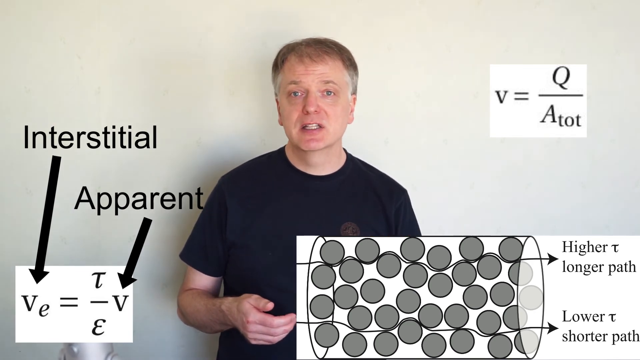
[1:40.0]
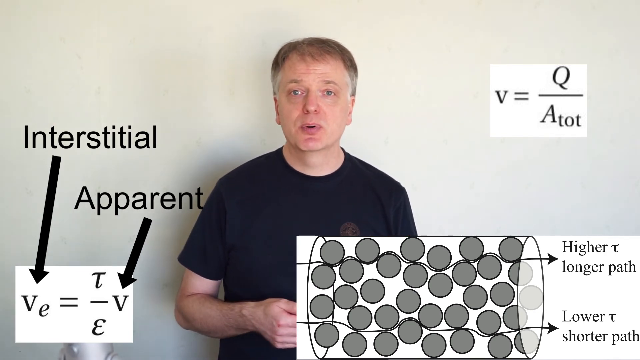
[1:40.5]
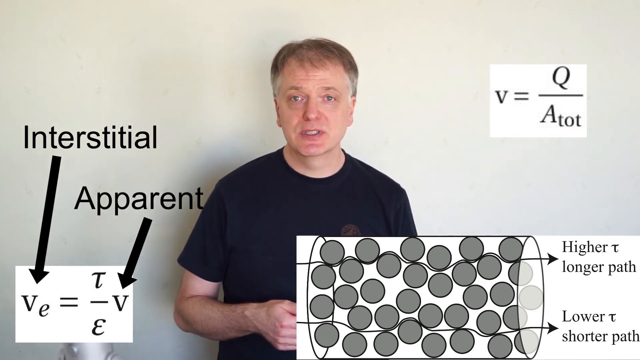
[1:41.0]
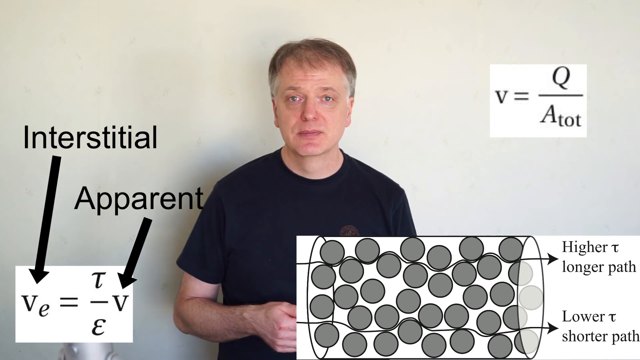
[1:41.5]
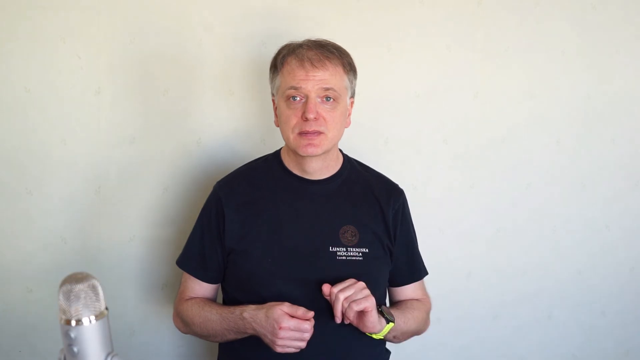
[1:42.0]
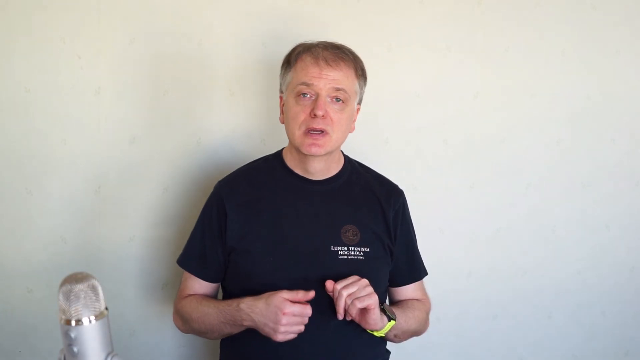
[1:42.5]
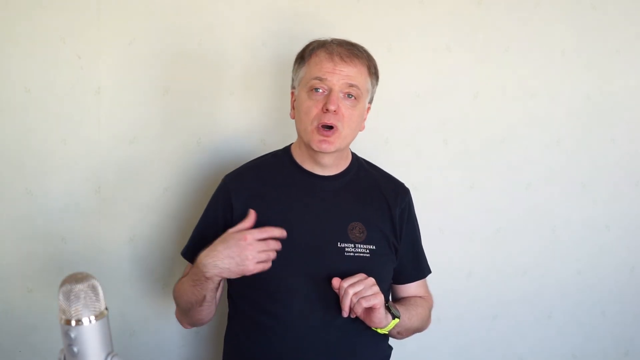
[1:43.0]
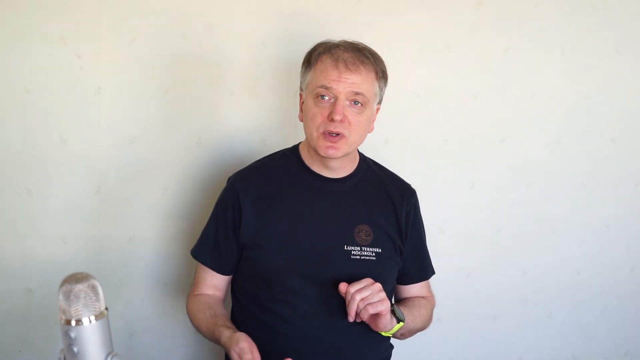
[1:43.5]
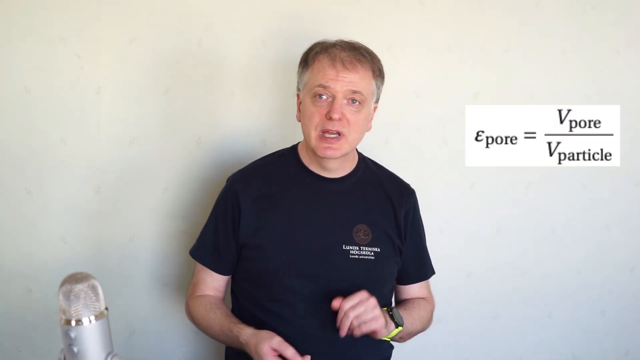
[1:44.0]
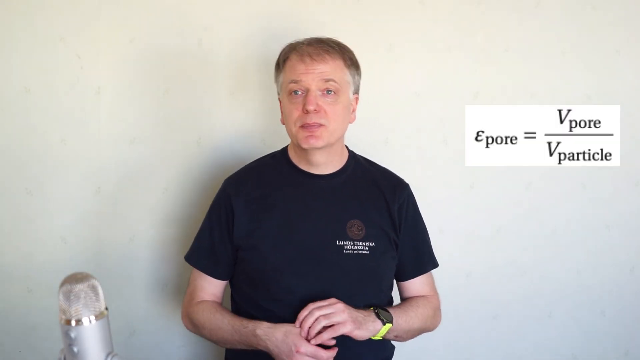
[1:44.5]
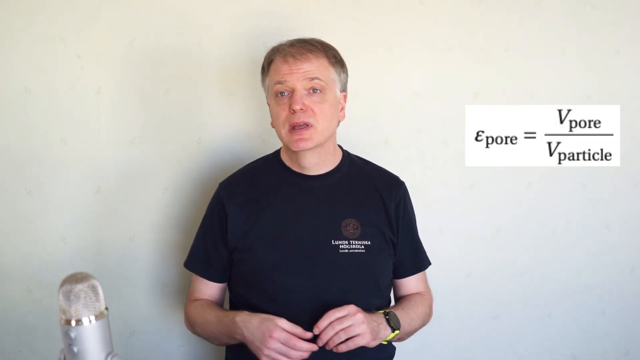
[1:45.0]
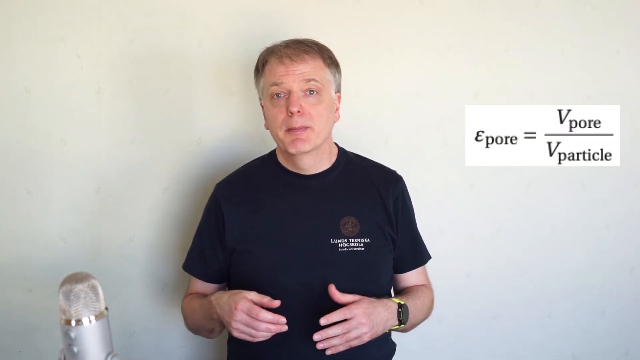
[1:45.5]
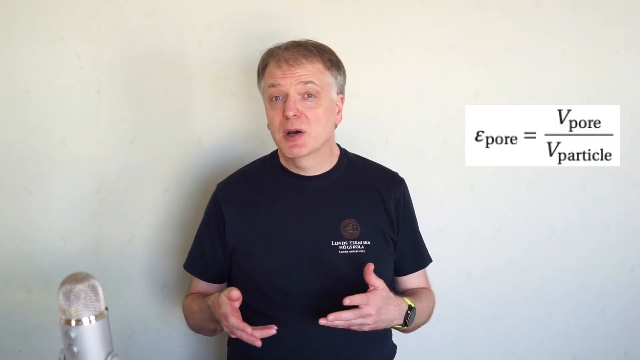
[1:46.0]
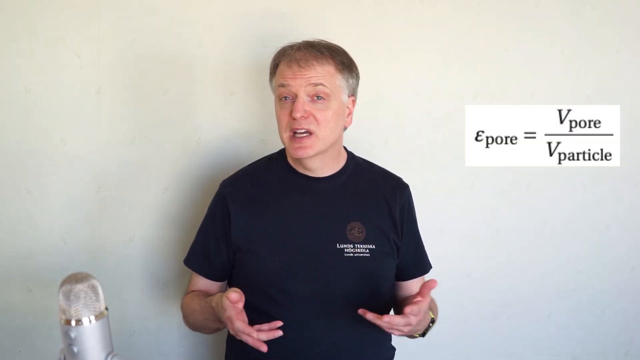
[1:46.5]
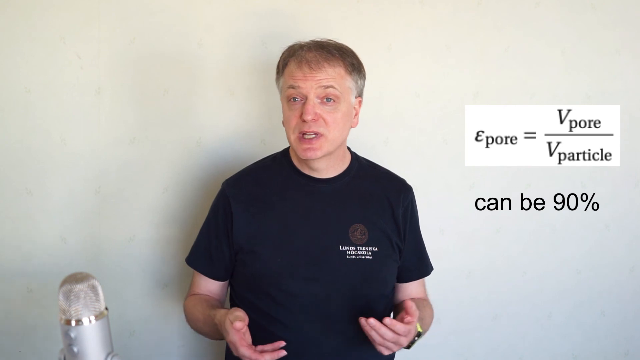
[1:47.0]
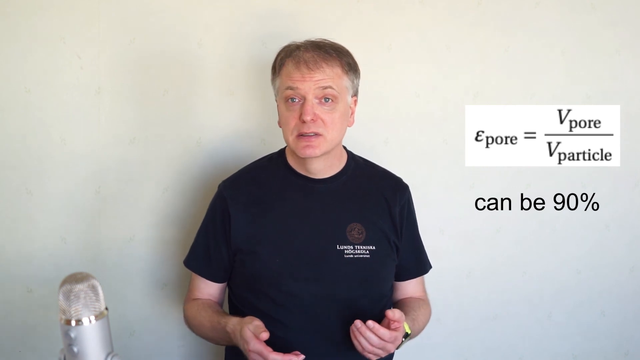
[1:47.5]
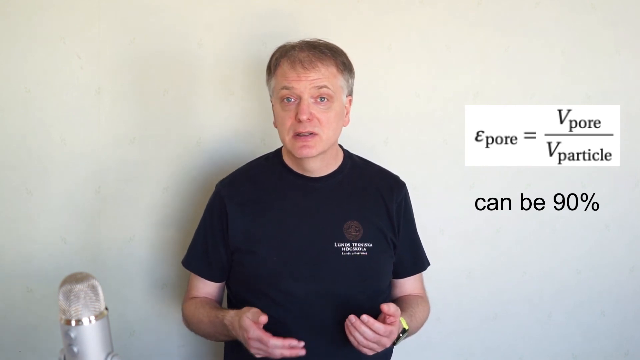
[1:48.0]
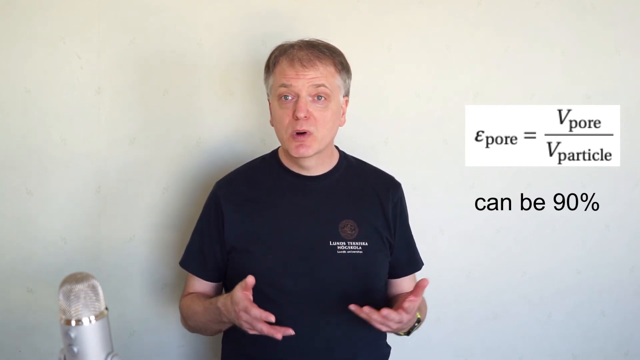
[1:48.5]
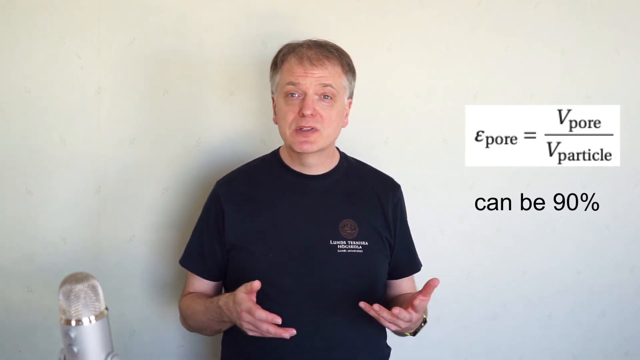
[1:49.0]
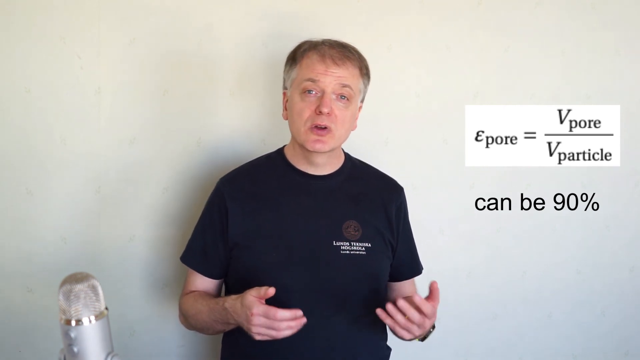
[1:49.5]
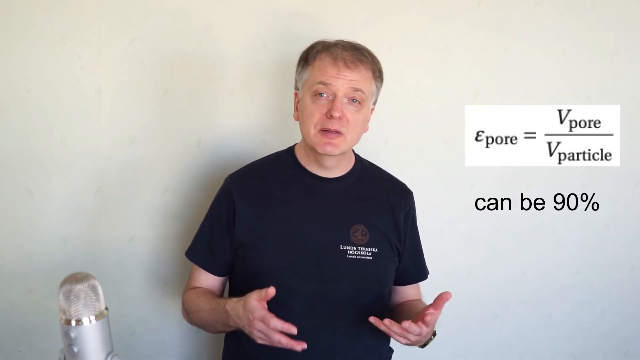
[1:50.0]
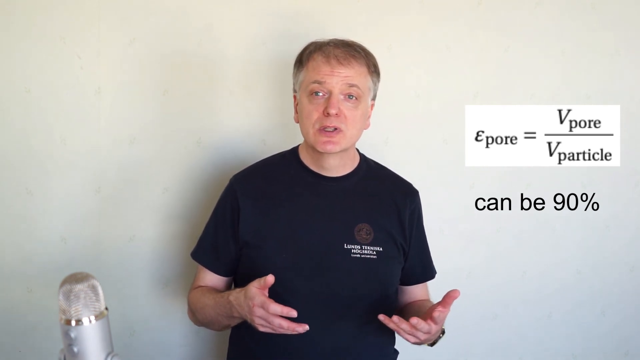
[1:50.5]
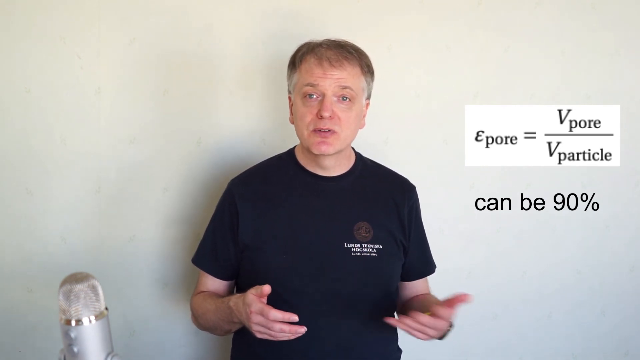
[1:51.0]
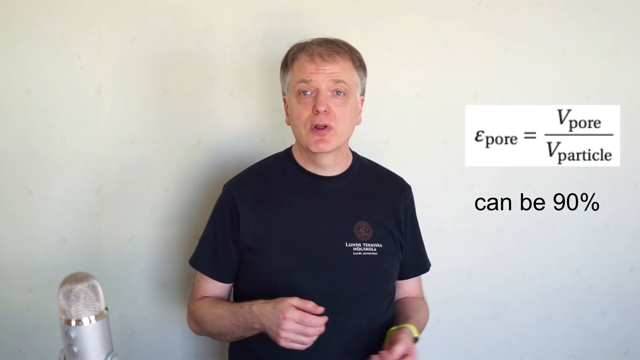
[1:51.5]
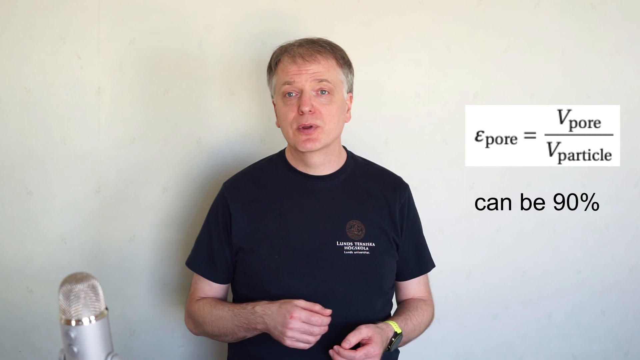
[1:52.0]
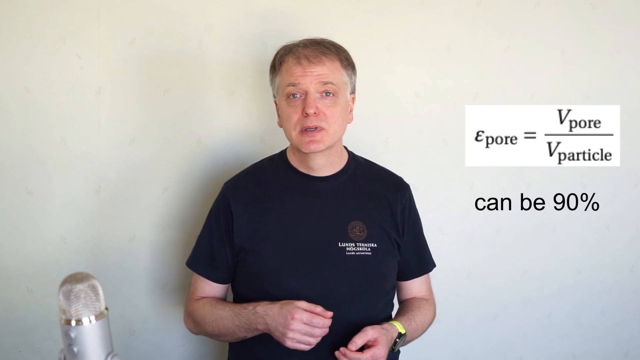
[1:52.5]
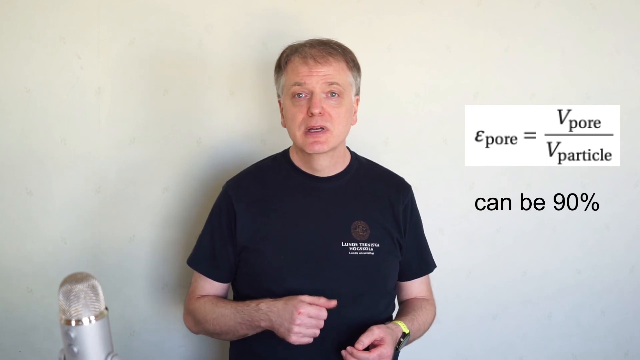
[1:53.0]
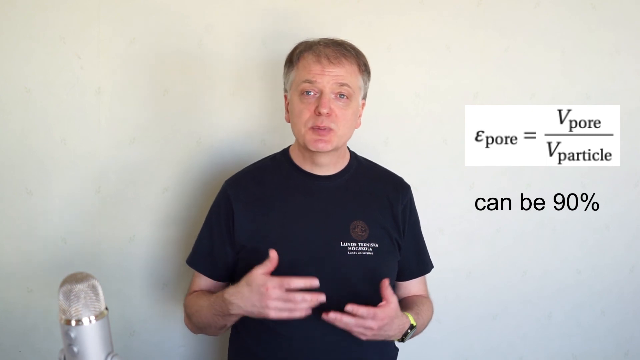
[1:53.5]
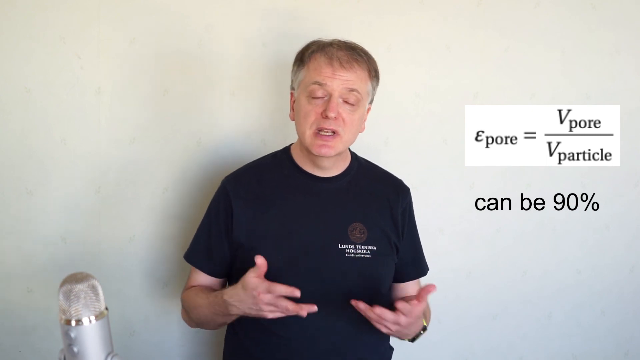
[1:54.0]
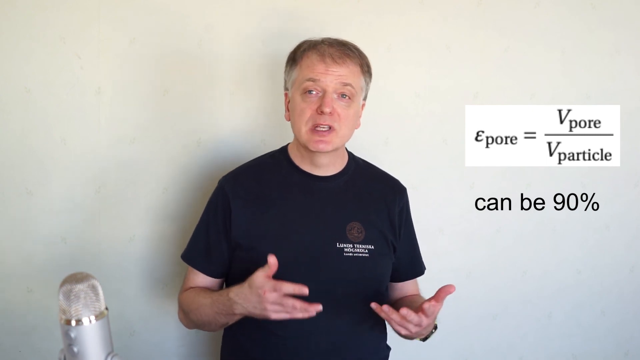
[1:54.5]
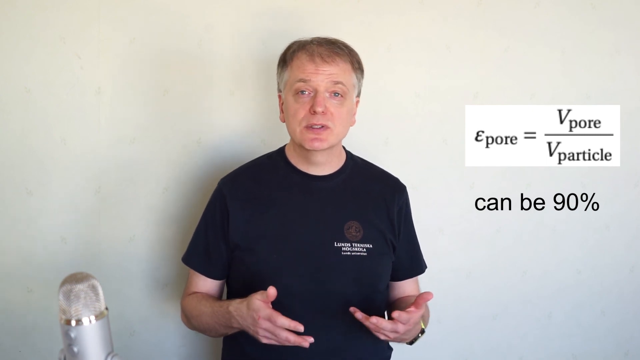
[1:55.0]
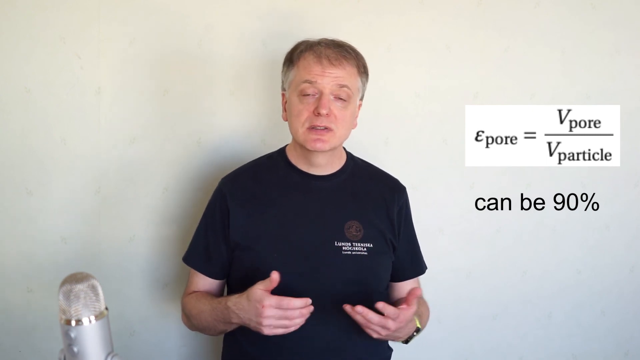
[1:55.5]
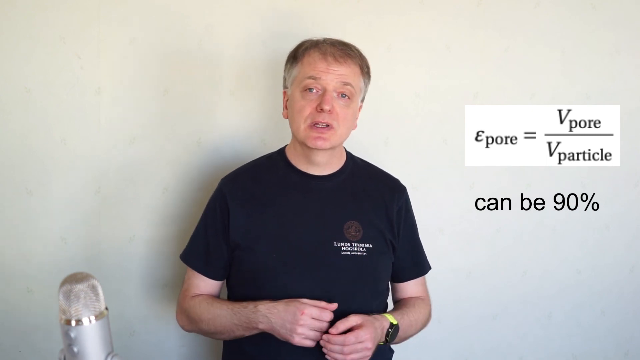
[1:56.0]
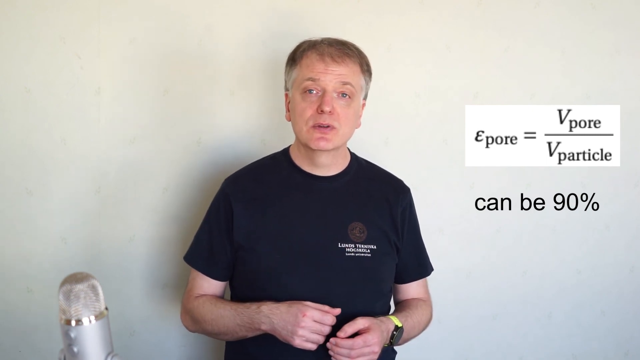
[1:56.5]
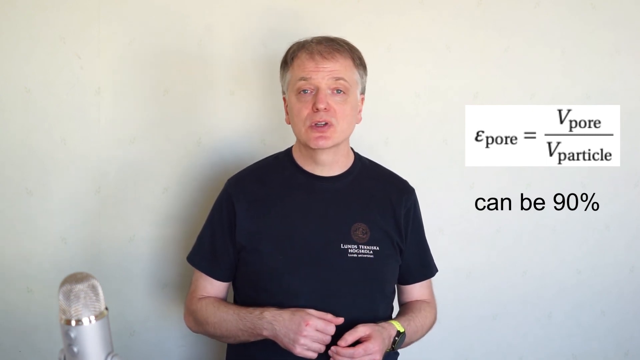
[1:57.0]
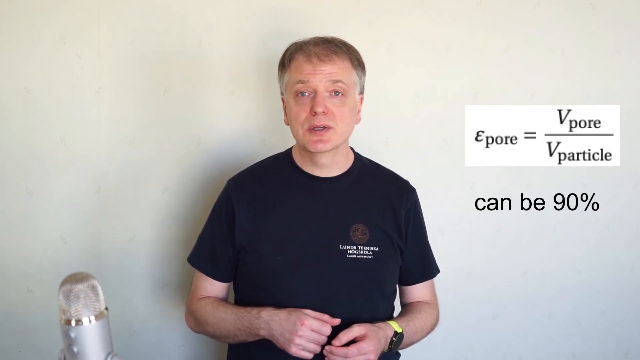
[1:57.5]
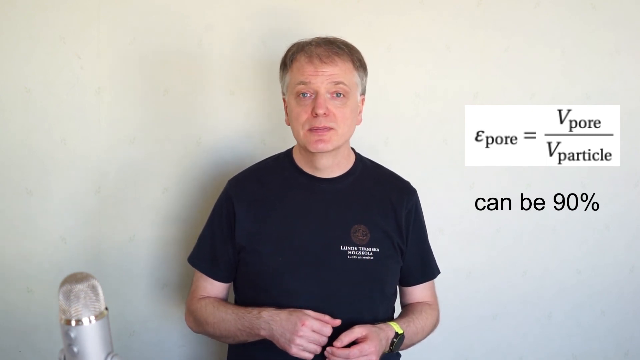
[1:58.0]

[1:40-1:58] A man stands in front of a white wall. To his lower left, near his left elbow, text reads "interstitial" pointing to a V with a lowercase e, and "apparent" pointing to a plain V. There is also a drawn cylinder that is kind of tipped over, with arrows running through some balls, and text reading "higher T longer path" and, at the bottom of that section, "lower T slower path". Then "E pore equals V pore over V particle" pops up, and he says that it can be 90%. He wears a watch that is black in the center where the hands are, with an all-yellow wrist strap. Near the end, something in the lower corner to his left kind of looks like a little robot.